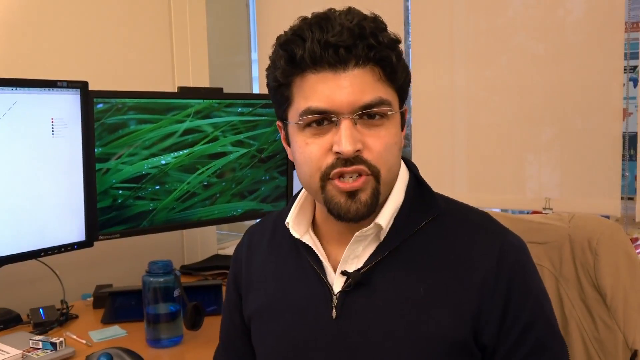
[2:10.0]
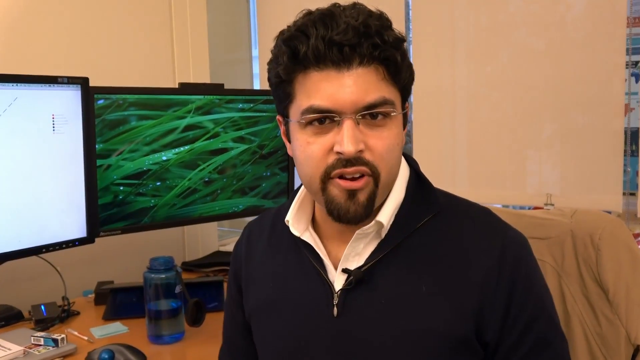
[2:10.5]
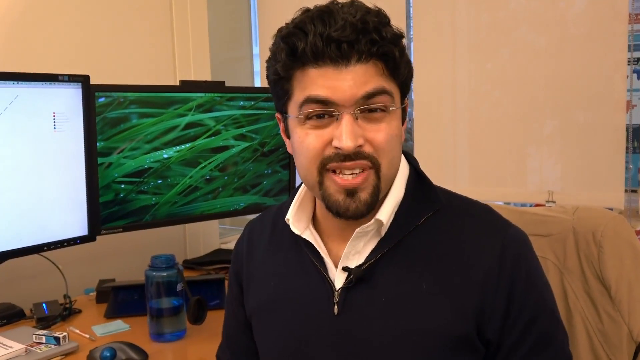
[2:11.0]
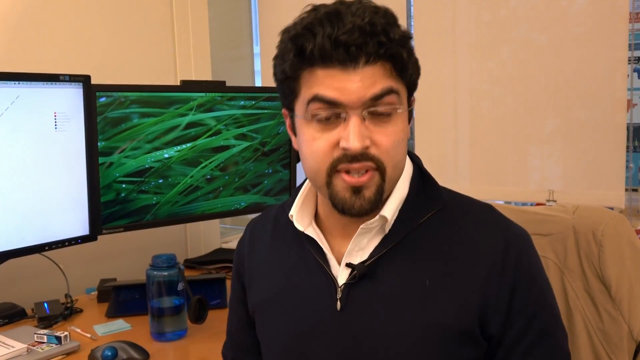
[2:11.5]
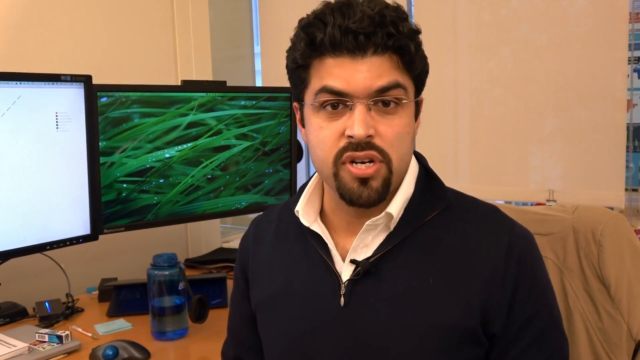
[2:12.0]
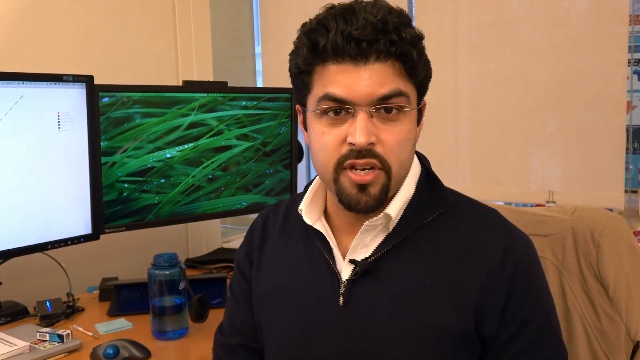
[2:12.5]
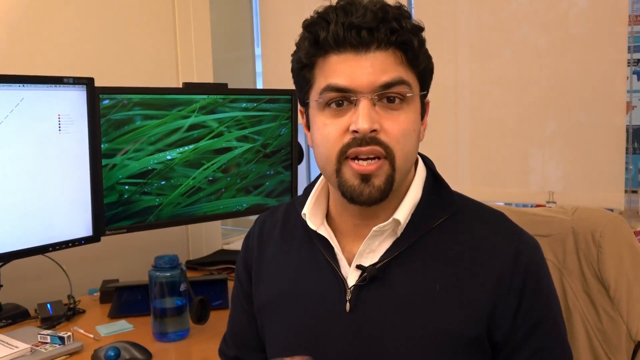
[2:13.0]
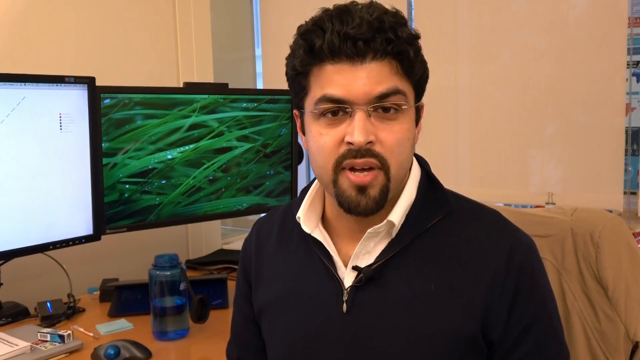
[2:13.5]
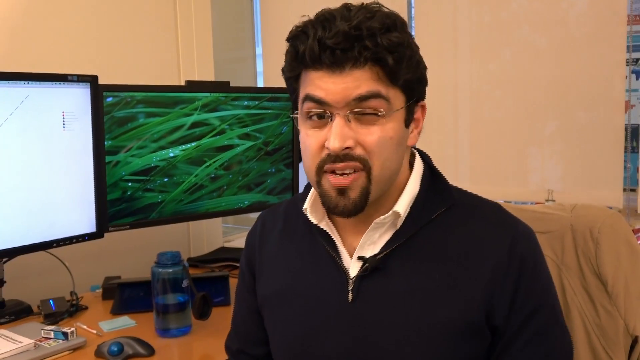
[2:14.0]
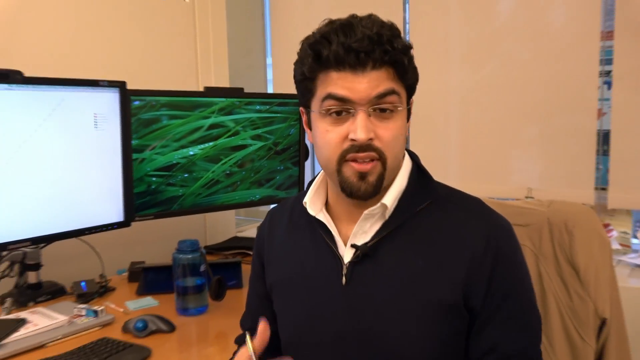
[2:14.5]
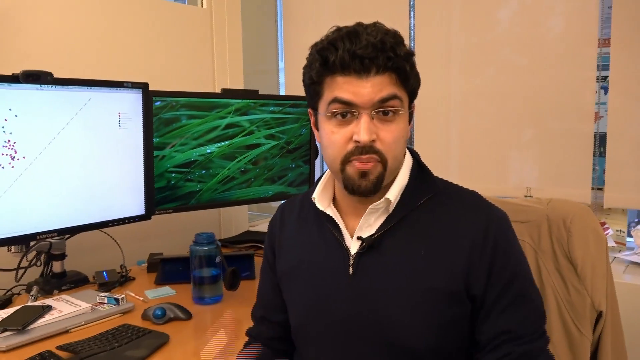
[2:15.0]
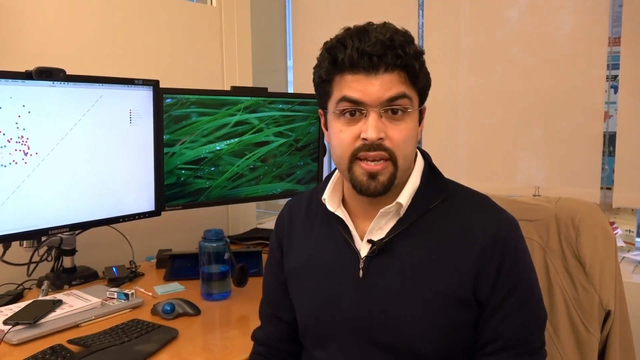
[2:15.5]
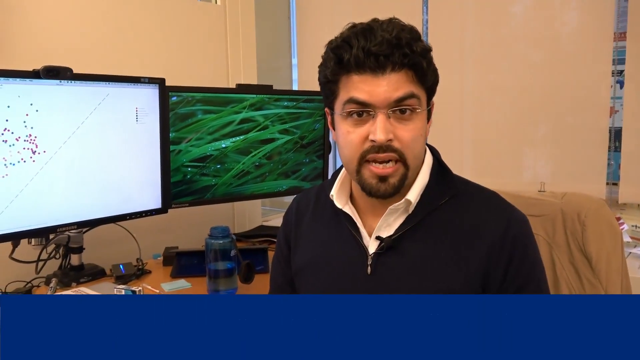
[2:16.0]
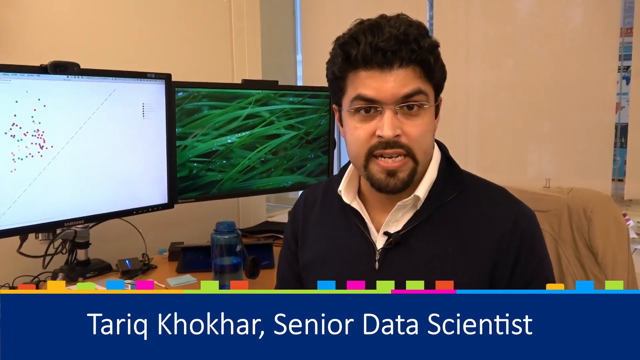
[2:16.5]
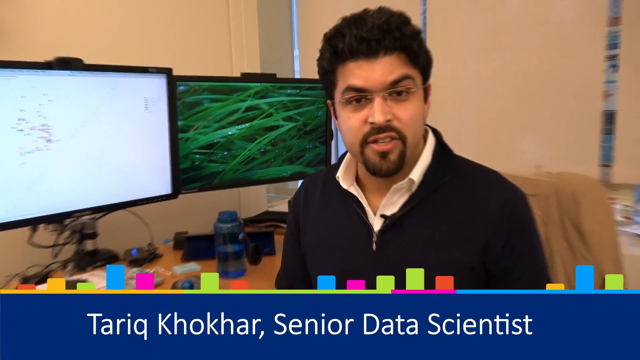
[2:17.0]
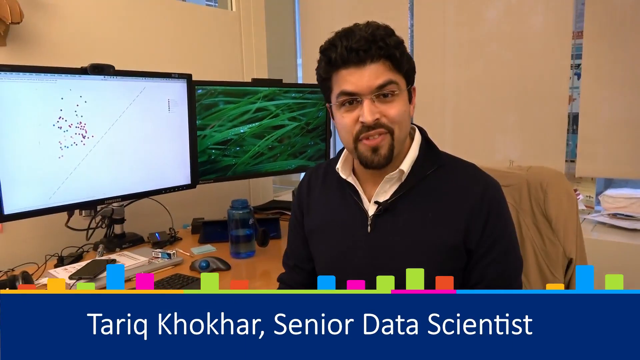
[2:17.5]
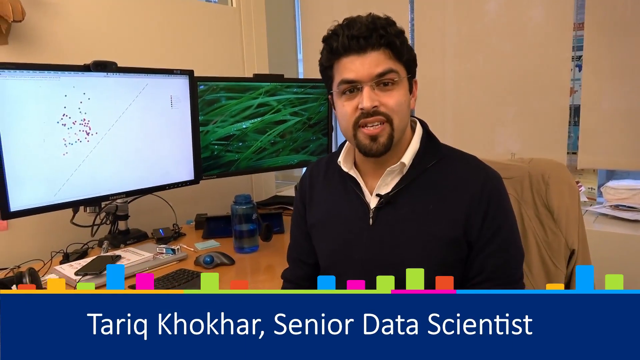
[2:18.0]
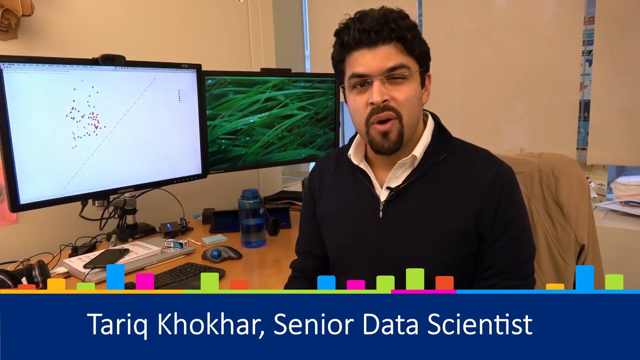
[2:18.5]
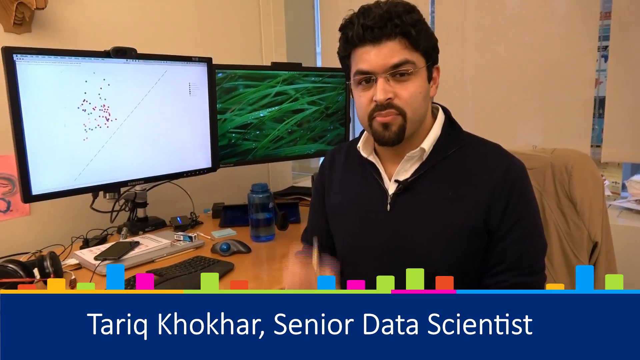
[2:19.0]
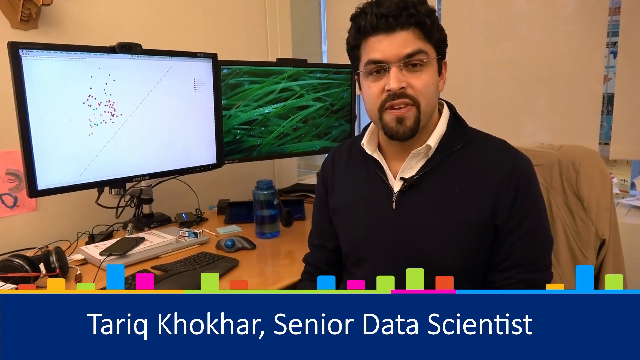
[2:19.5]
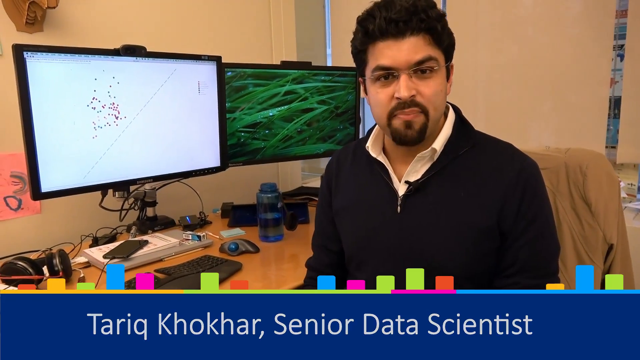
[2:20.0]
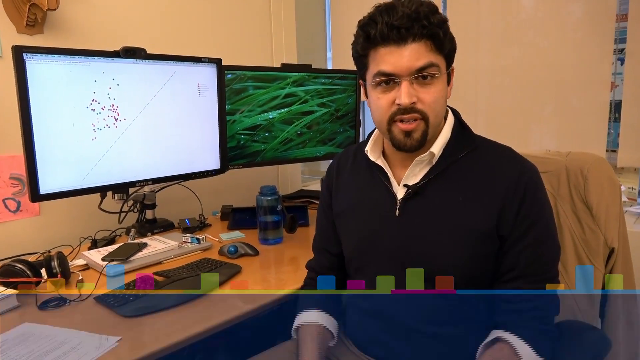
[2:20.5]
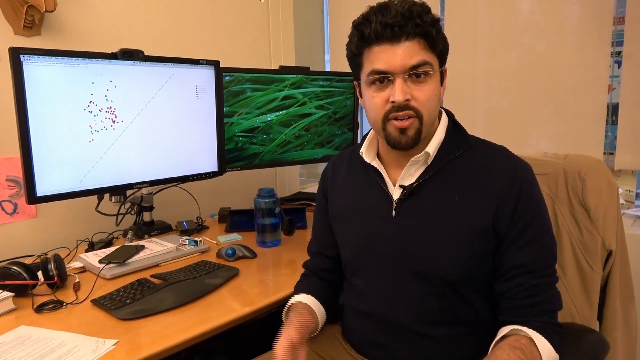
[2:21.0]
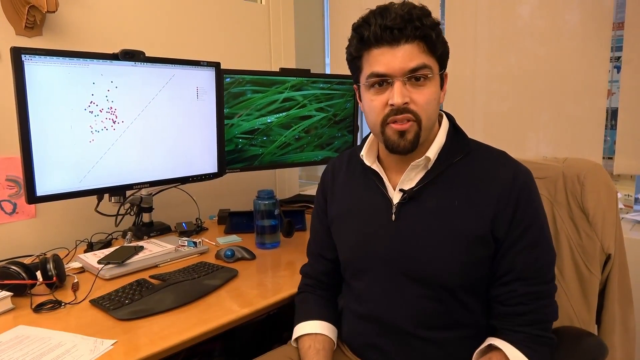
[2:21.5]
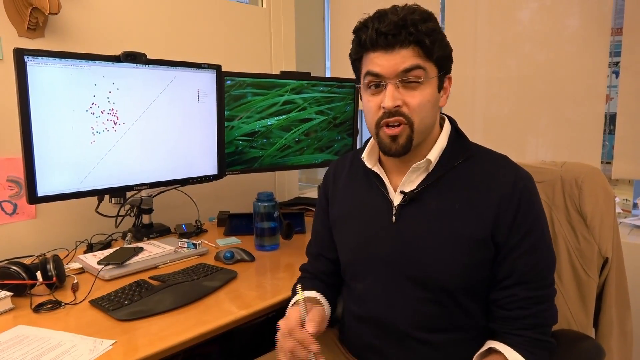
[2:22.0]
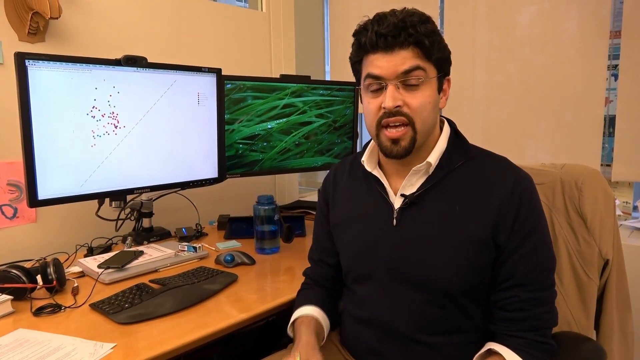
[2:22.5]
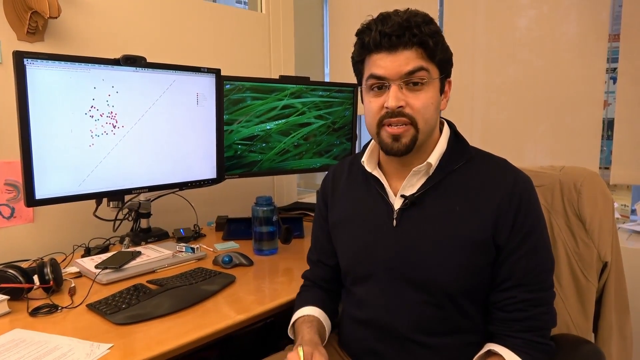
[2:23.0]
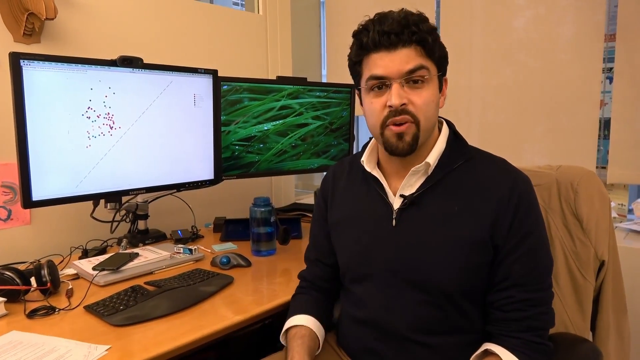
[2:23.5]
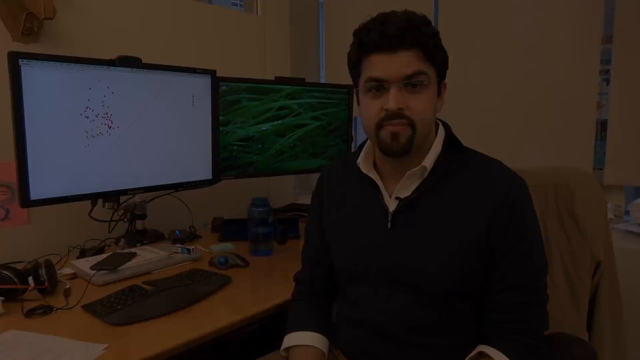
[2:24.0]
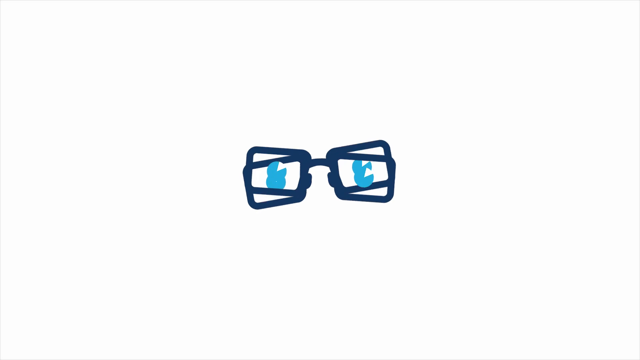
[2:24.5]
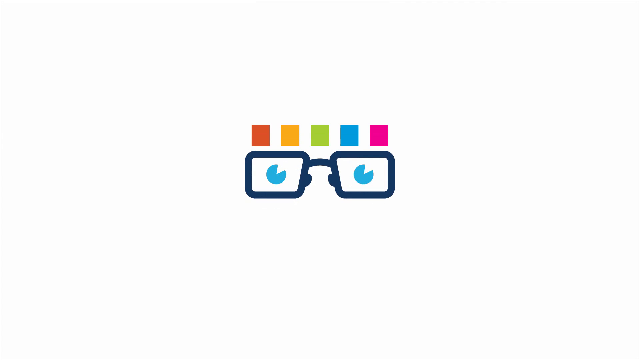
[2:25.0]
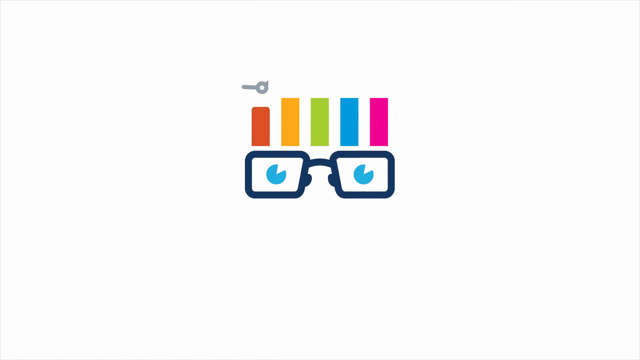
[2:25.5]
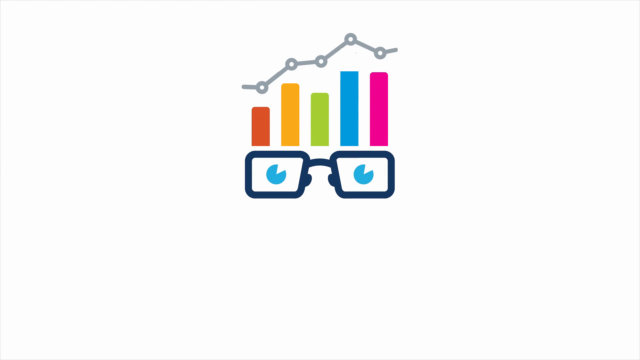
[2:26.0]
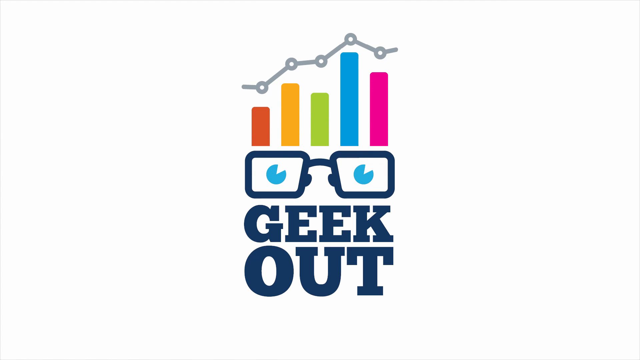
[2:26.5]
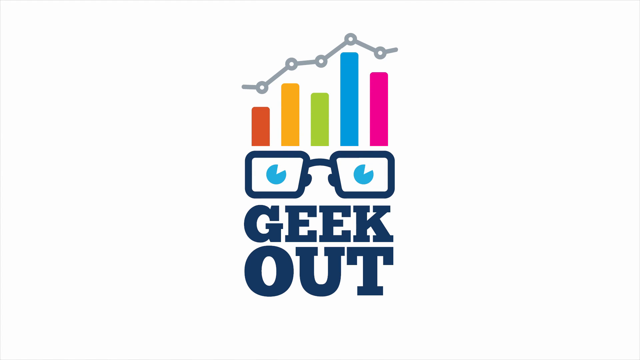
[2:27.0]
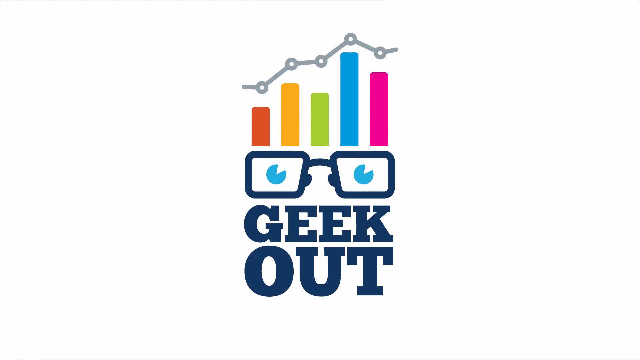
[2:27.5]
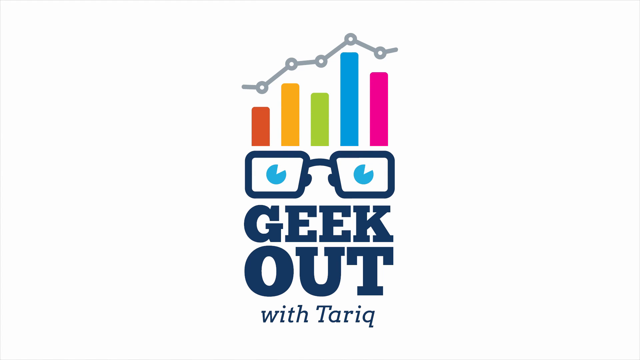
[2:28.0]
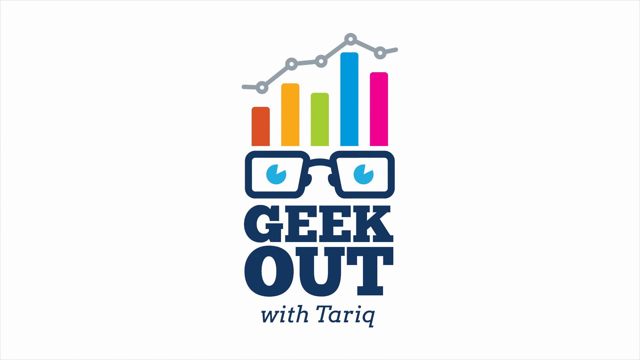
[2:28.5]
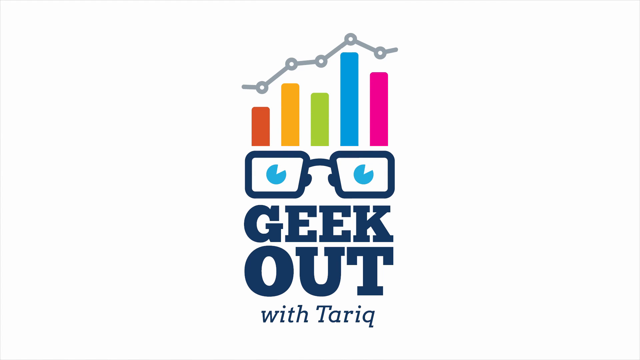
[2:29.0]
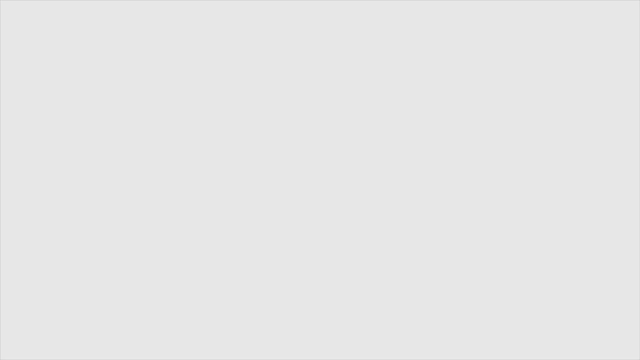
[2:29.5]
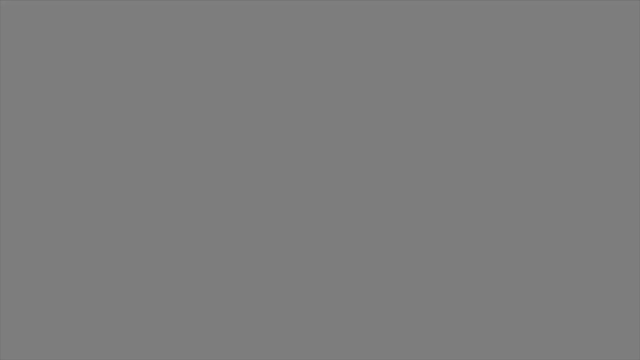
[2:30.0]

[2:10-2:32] The man is back at his desk, which has two monitors. One shows what looks like DNA strands or molecules in green; there is also a plotted graph with multiple plots in different colors. He sits looking at the camera, talking. The camera suddenly pans back quickly and abruptly, opening up the view of the desk, which looks like a normal desk, and showing a bit more of the room as he finishes his explanation.